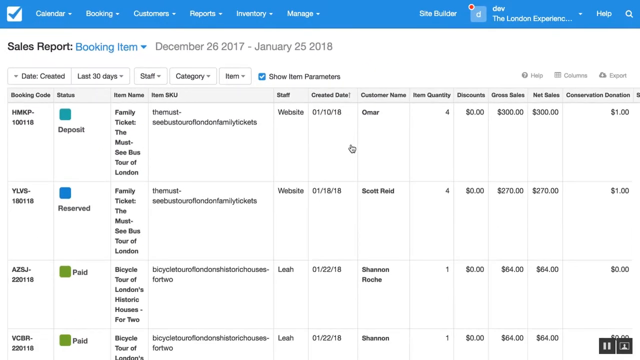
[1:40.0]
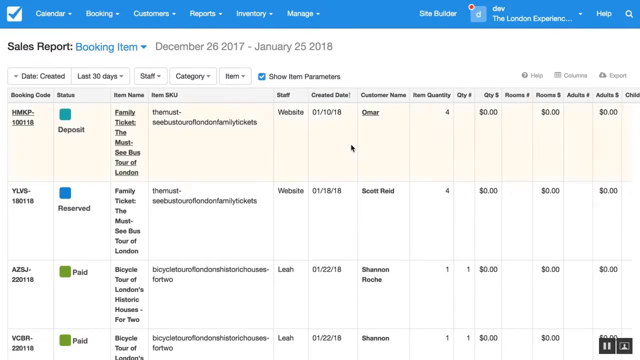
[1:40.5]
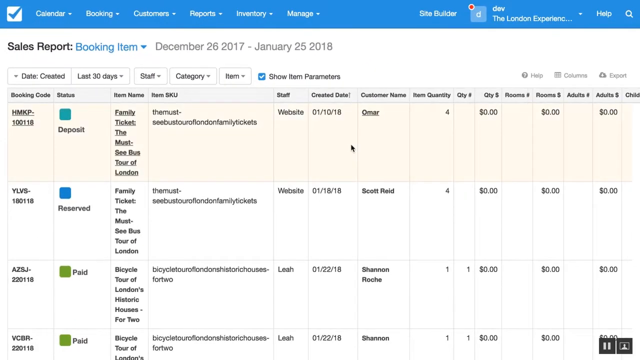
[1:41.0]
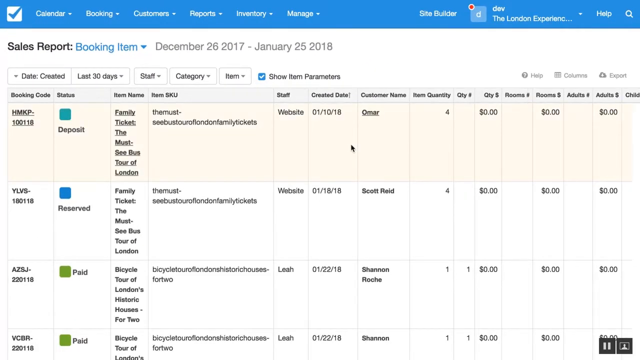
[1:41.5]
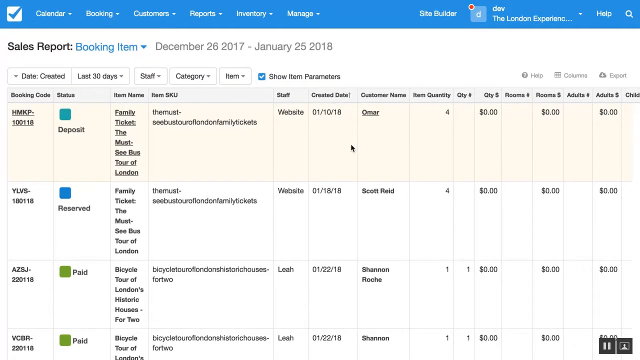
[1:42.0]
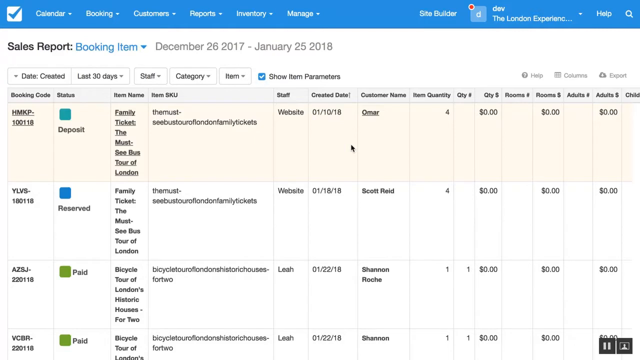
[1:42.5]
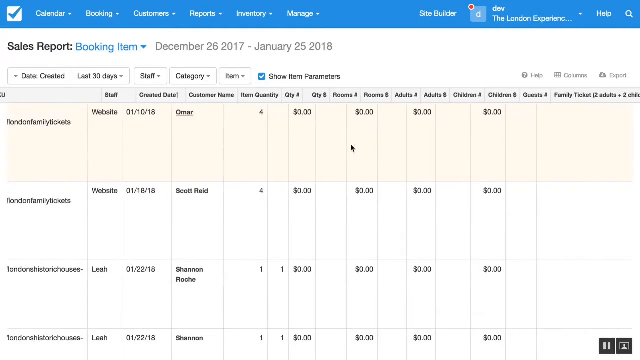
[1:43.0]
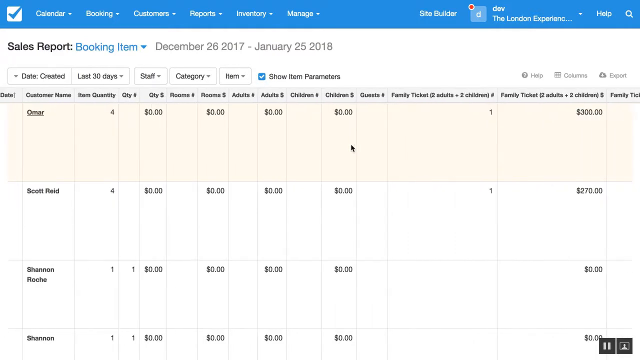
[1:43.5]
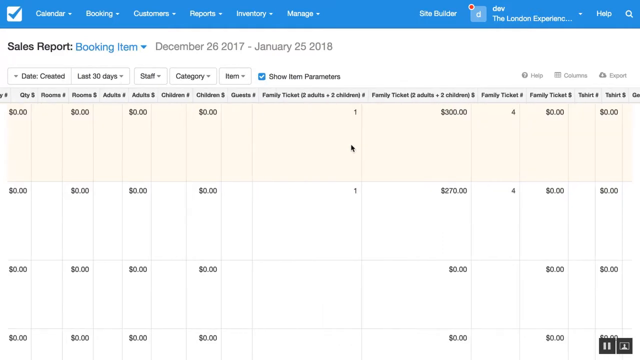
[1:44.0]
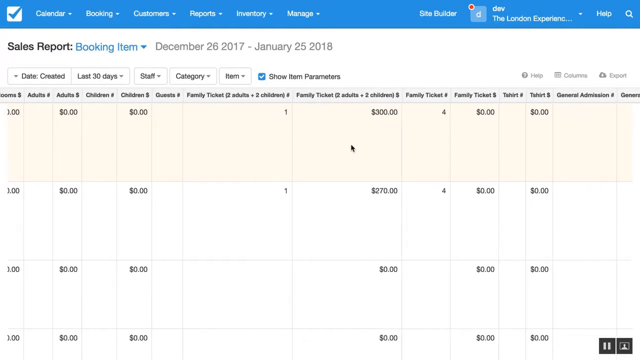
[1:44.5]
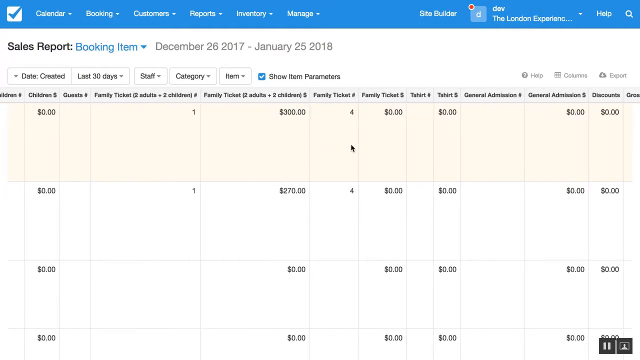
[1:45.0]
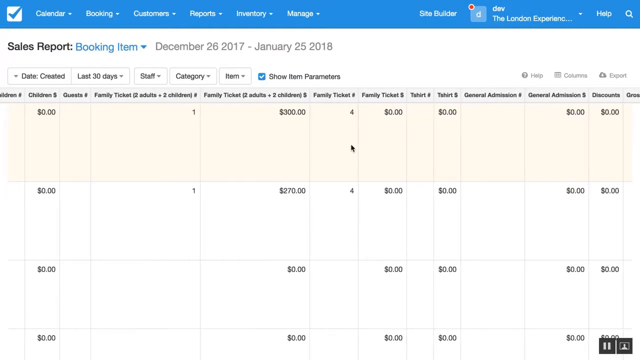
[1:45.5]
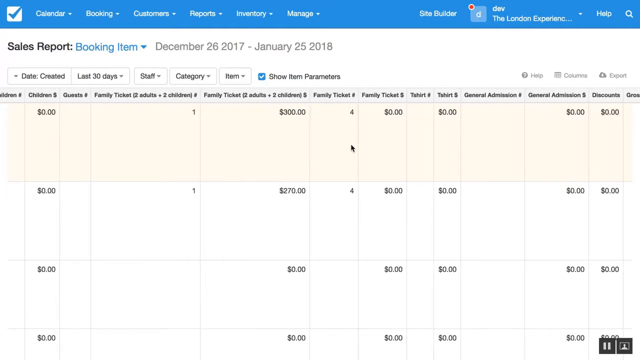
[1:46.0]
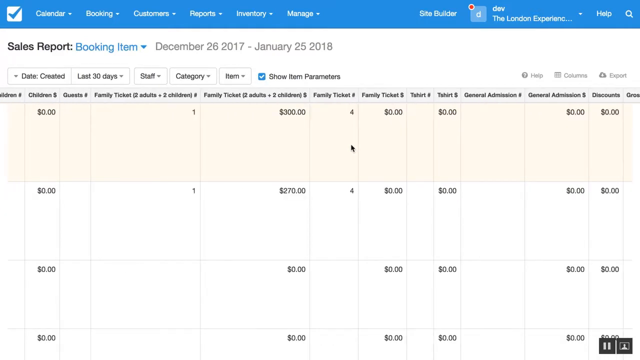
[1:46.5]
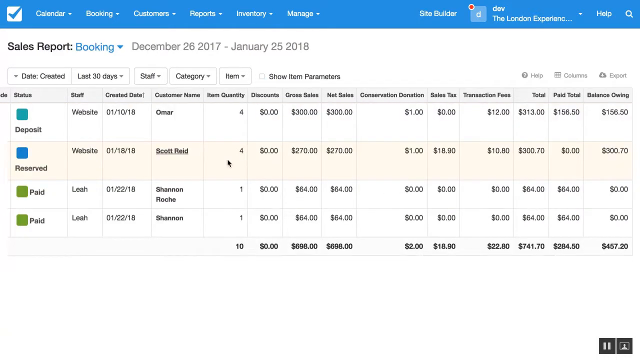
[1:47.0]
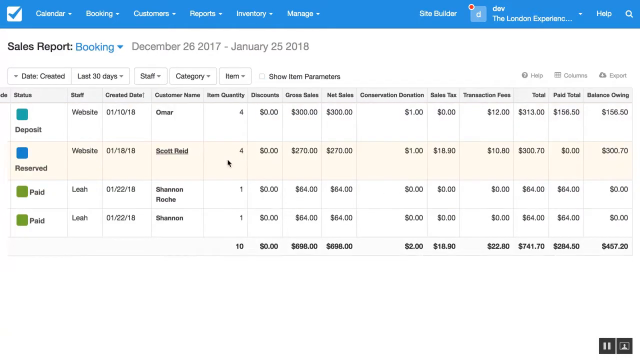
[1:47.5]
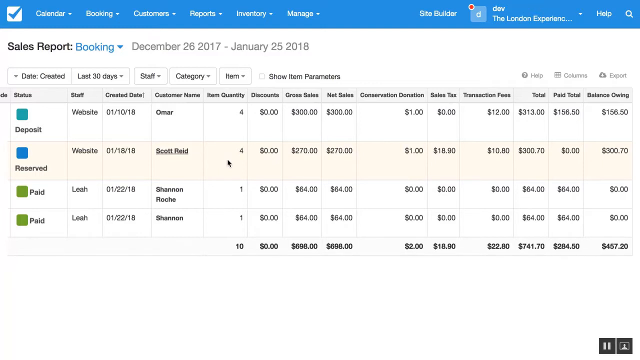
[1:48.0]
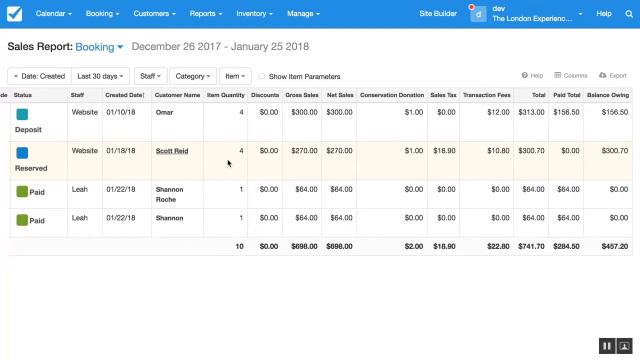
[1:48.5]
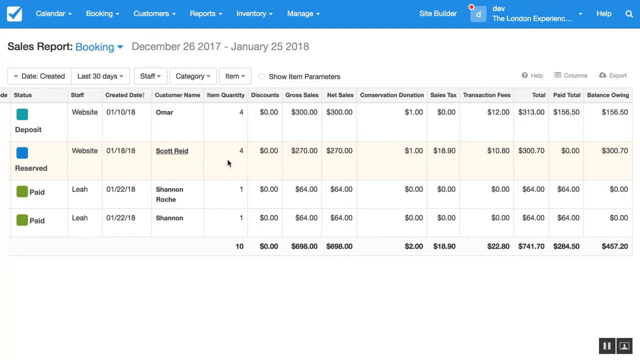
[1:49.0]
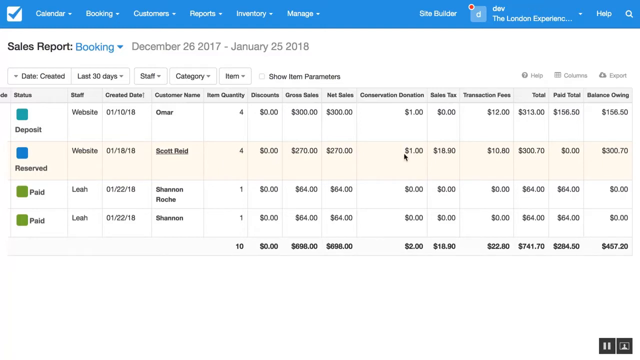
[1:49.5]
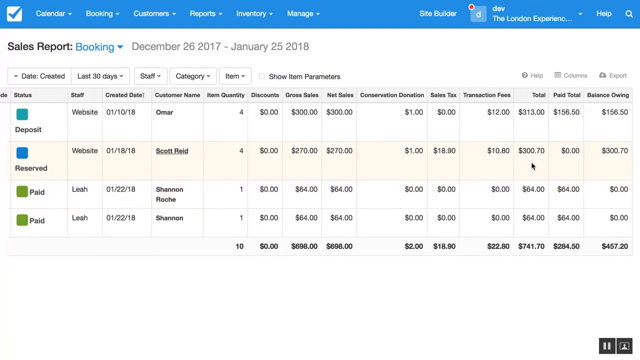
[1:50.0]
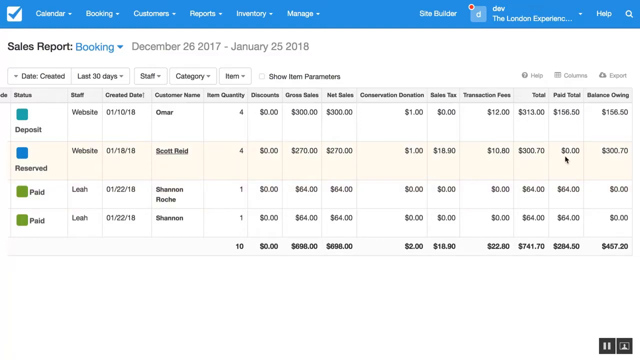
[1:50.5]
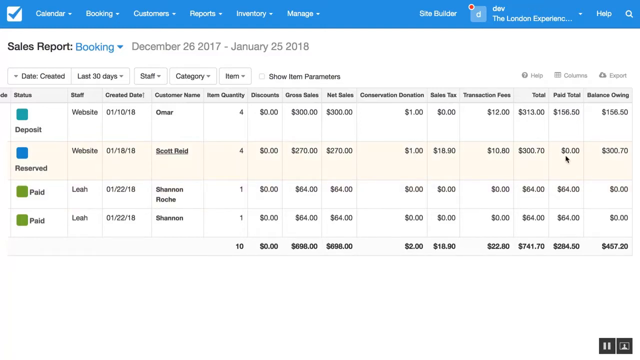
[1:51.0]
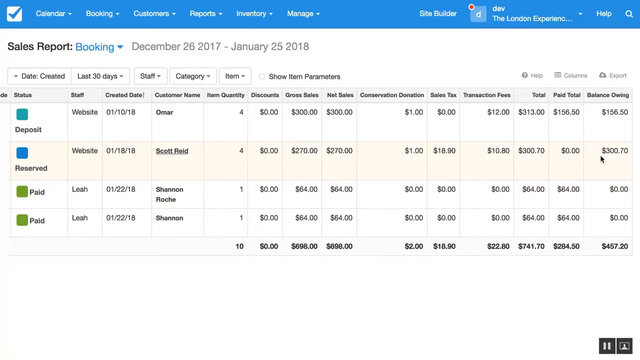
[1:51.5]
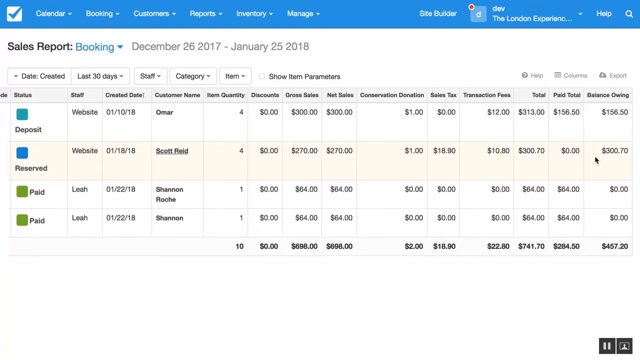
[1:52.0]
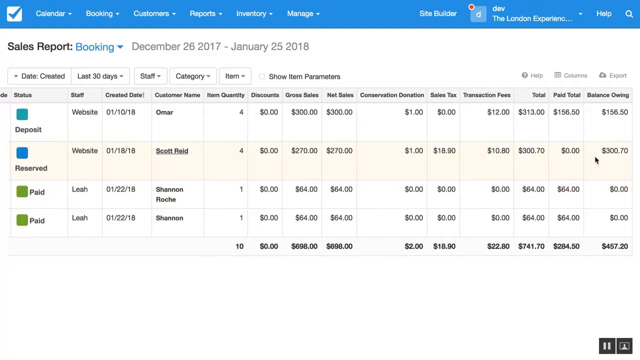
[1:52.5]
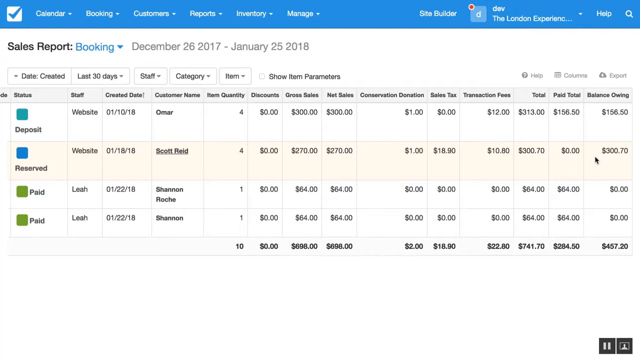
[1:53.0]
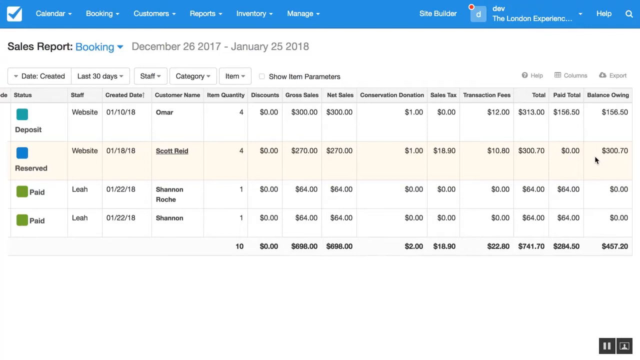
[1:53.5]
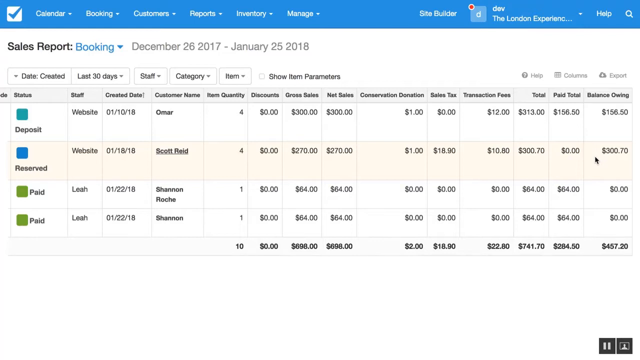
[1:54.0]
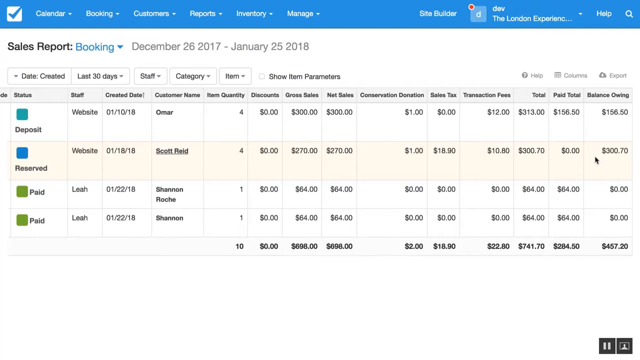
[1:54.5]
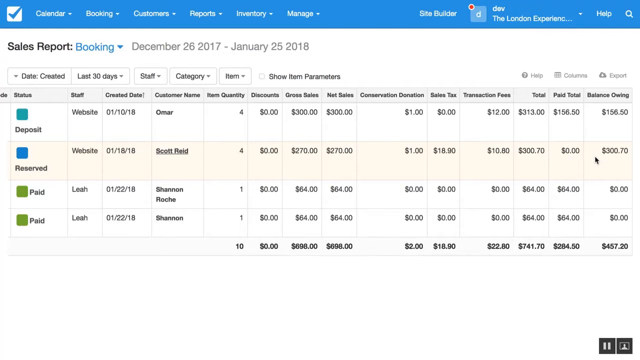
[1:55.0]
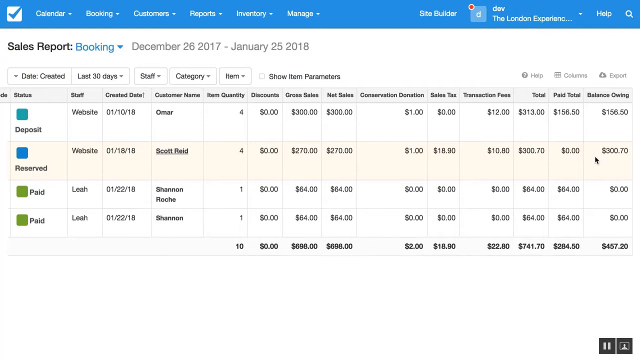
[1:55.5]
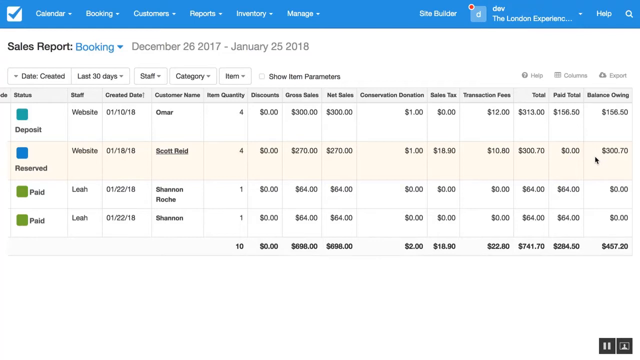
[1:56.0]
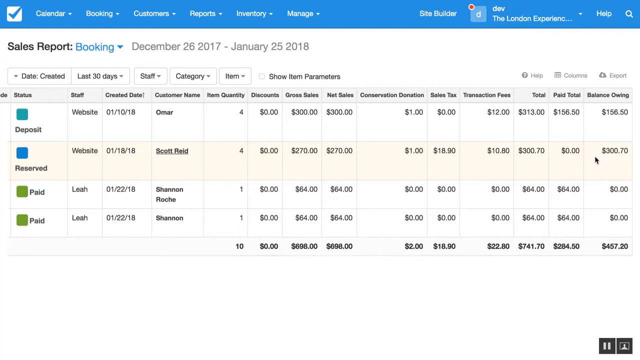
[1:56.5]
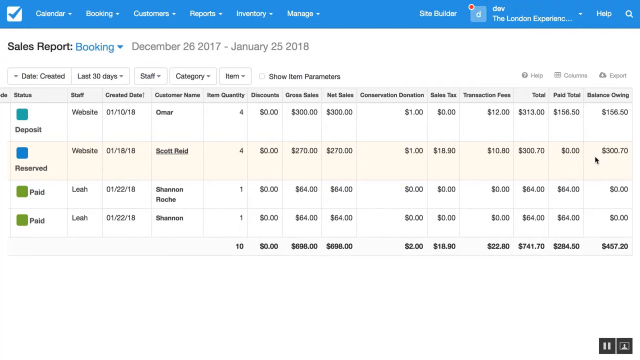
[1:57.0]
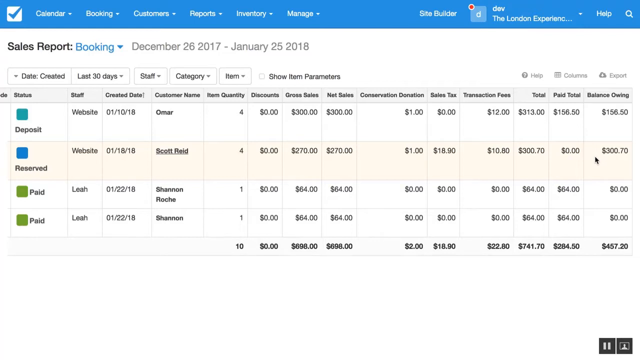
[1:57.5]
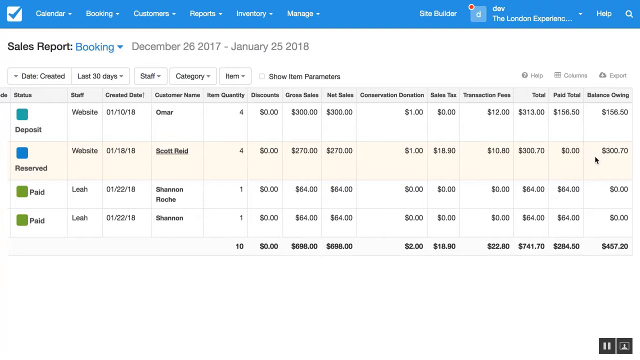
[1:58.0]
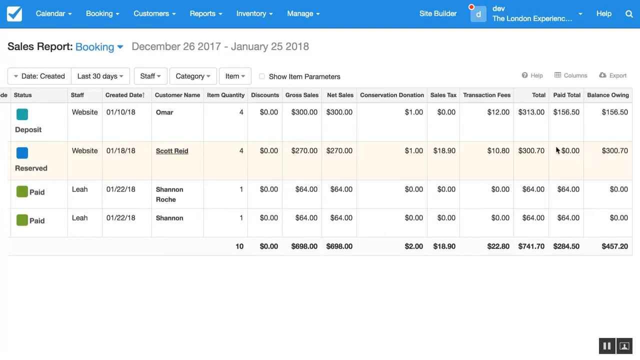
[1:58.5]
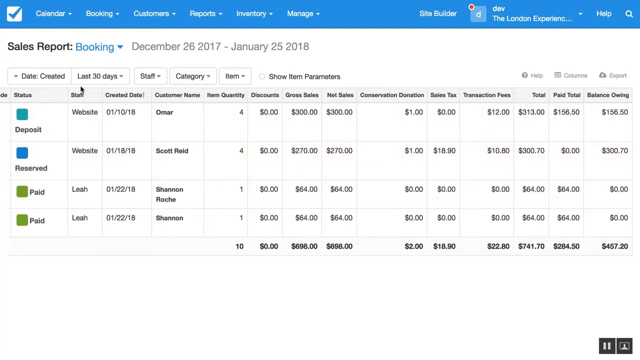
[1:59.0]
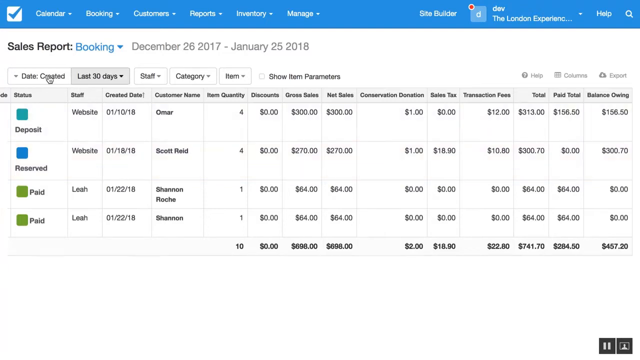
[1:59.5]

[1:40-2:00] The large table continues as the user scrolls sideways to the right, revealing the different columns of the full table with a lot of additional information. The user appears to reach the end of the table, and the mouse pointer moves all the way to the right side, into a boxed cell with the amount $300.70. The pointer then moves all the way across the page to the left side, over the button that says "Date Created."